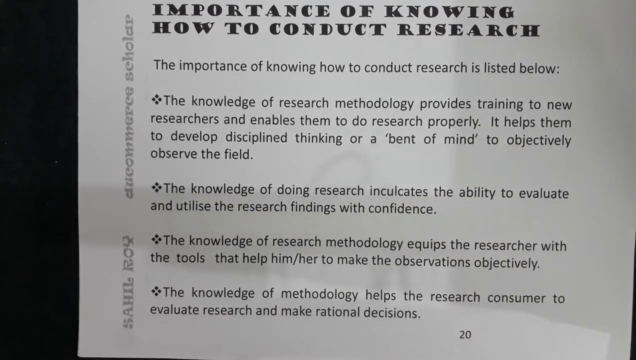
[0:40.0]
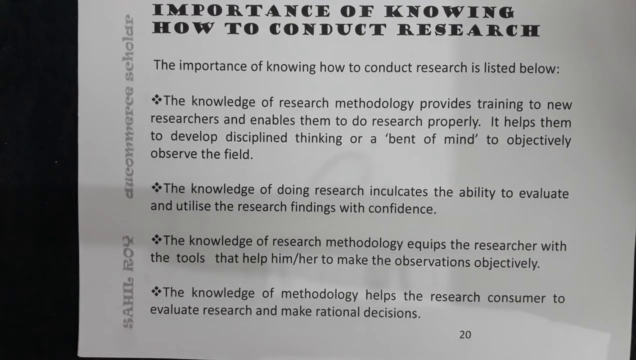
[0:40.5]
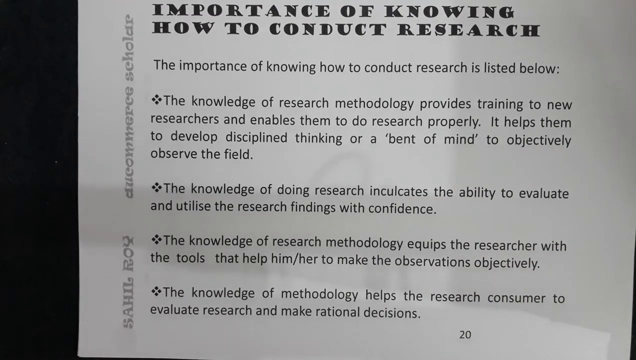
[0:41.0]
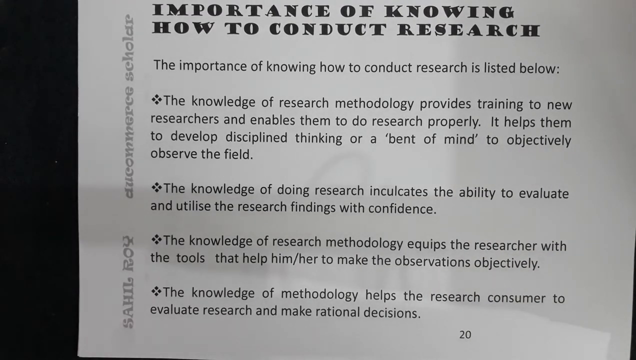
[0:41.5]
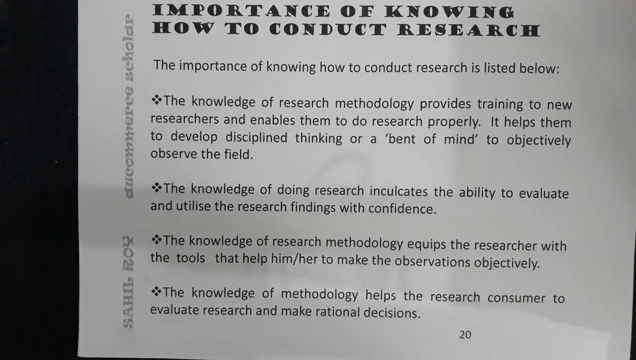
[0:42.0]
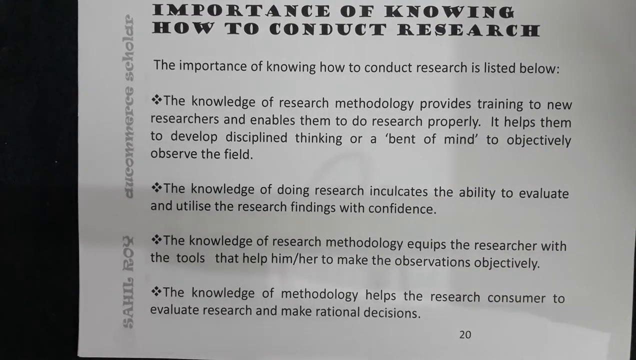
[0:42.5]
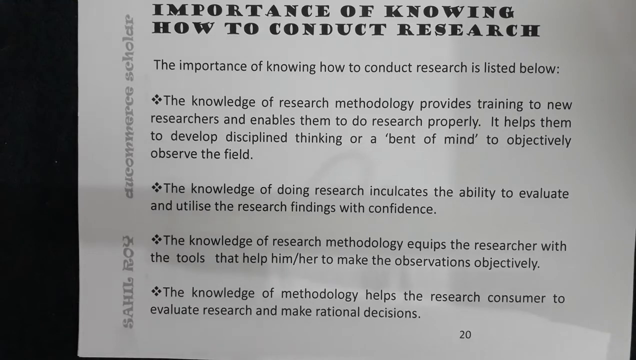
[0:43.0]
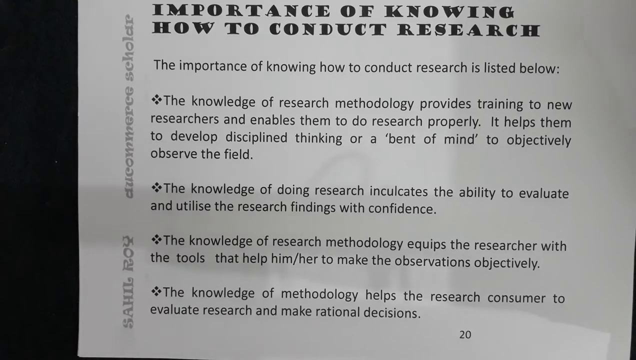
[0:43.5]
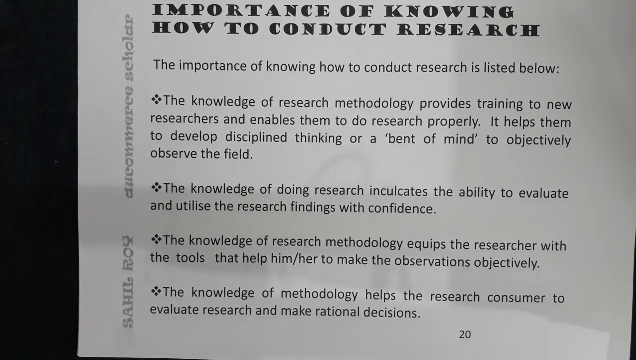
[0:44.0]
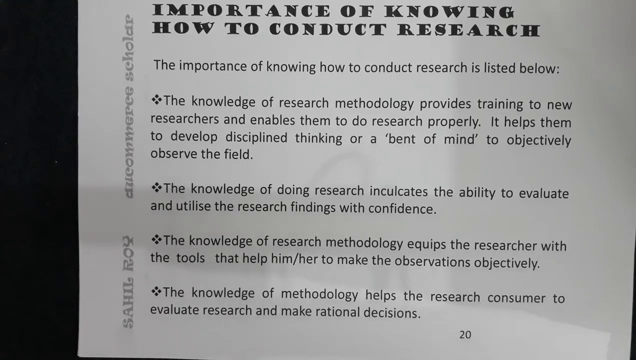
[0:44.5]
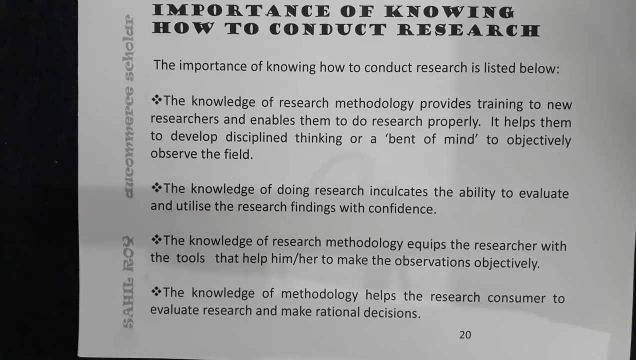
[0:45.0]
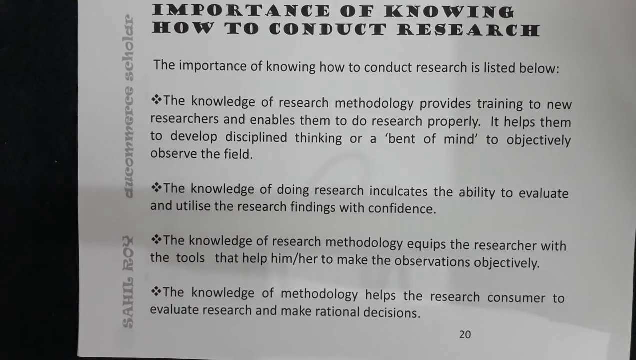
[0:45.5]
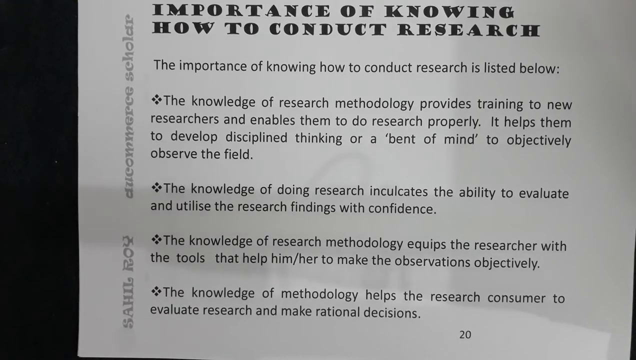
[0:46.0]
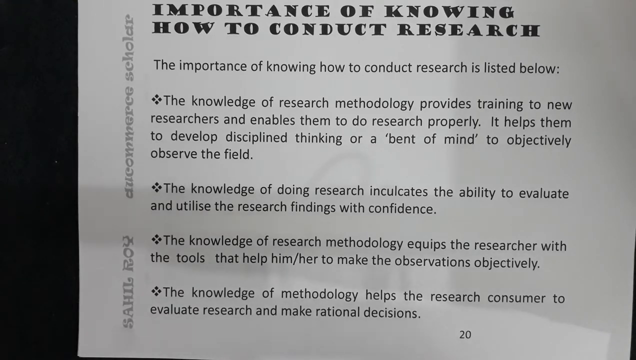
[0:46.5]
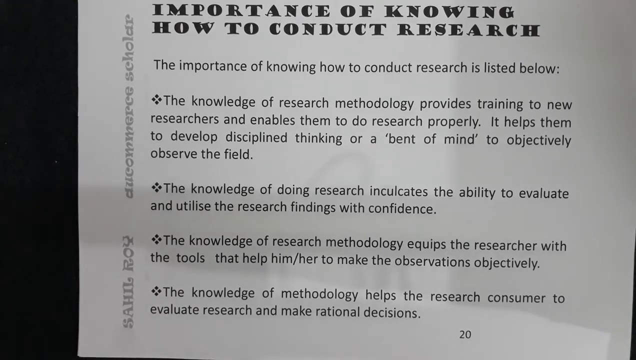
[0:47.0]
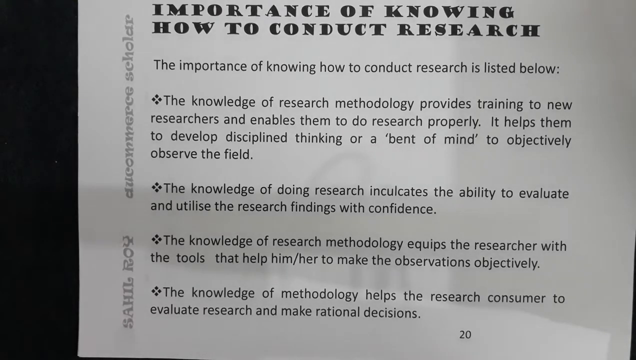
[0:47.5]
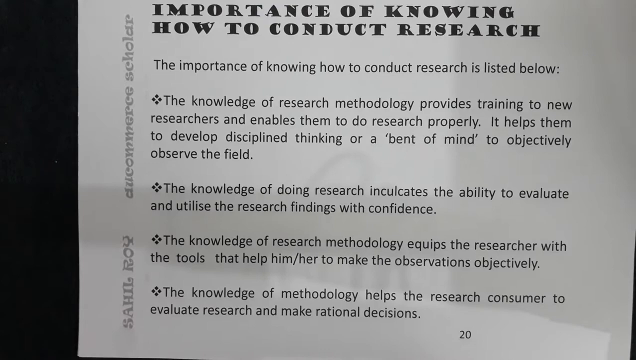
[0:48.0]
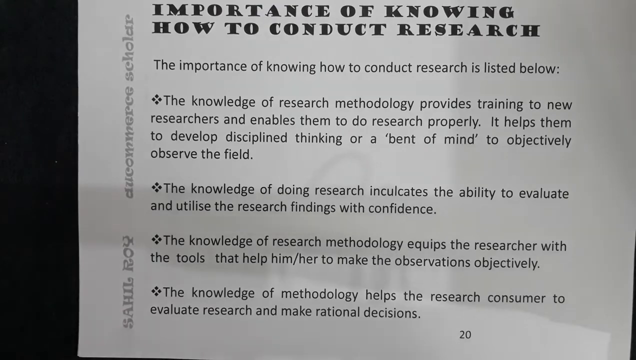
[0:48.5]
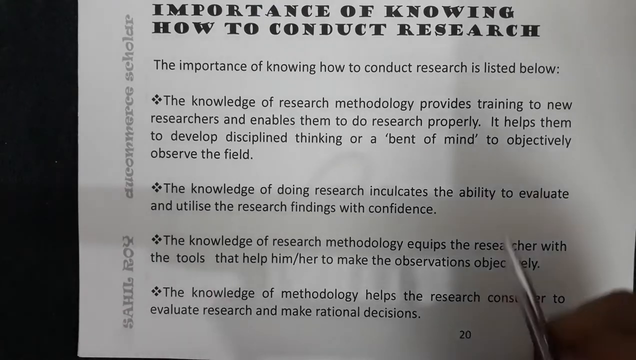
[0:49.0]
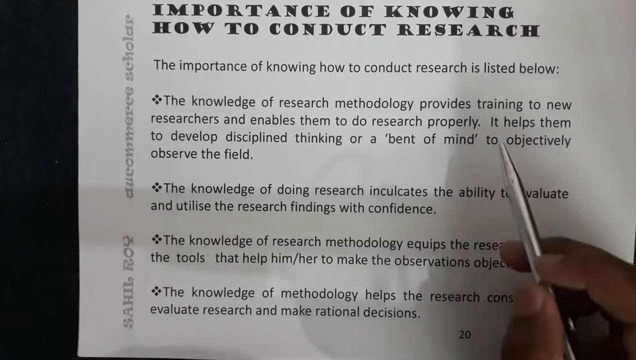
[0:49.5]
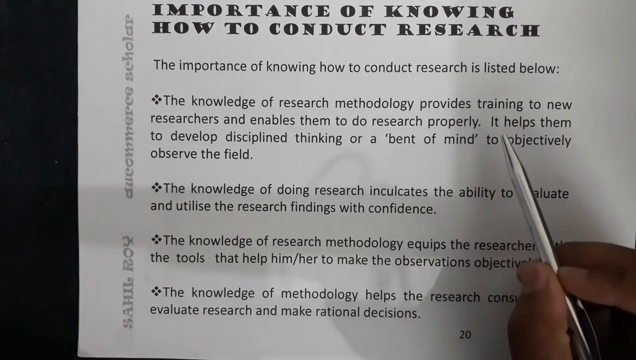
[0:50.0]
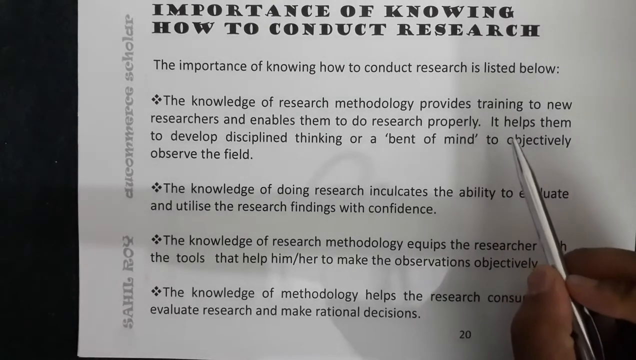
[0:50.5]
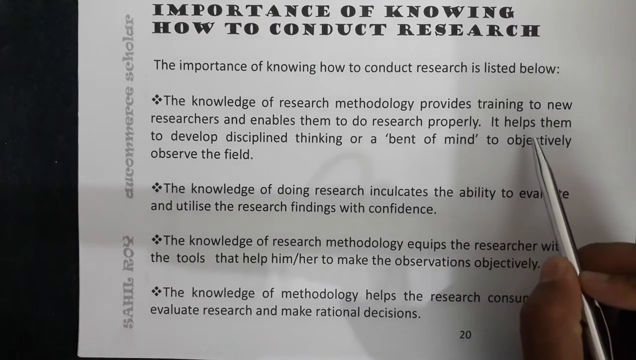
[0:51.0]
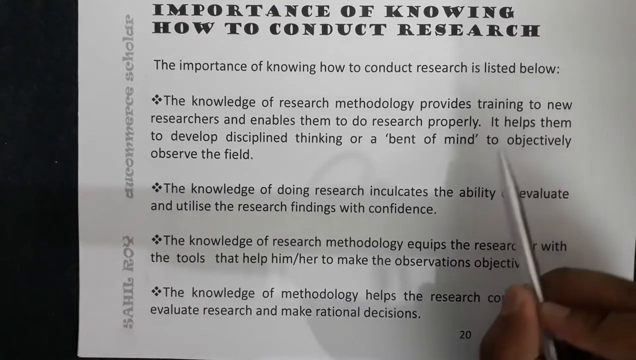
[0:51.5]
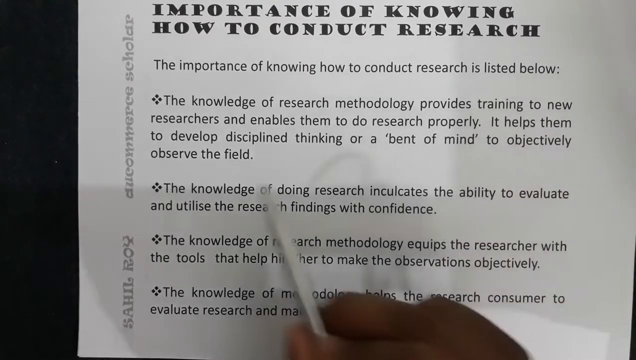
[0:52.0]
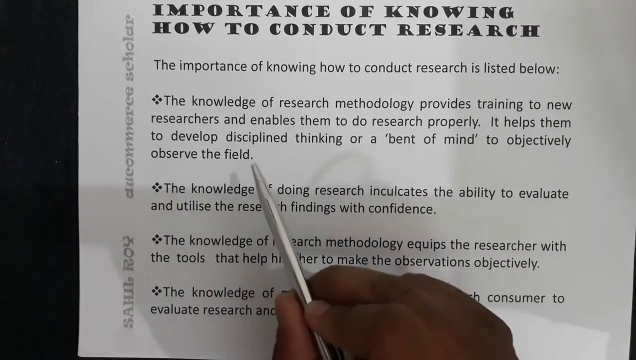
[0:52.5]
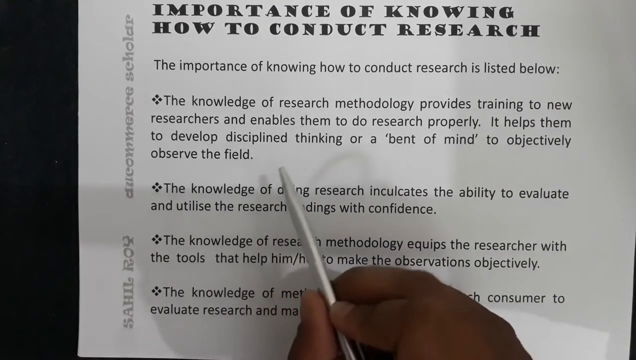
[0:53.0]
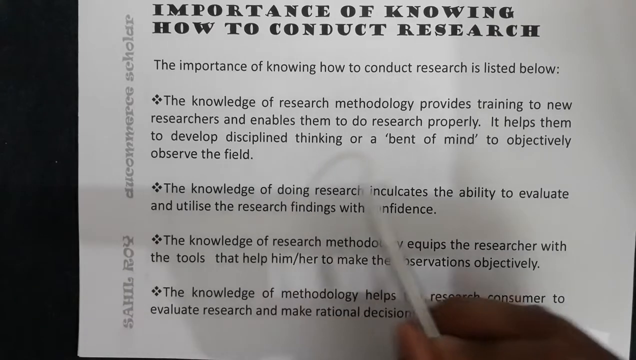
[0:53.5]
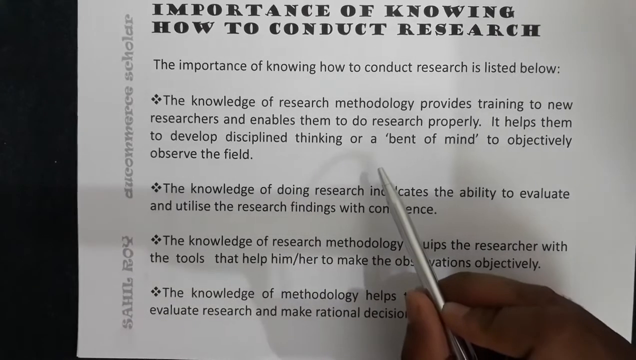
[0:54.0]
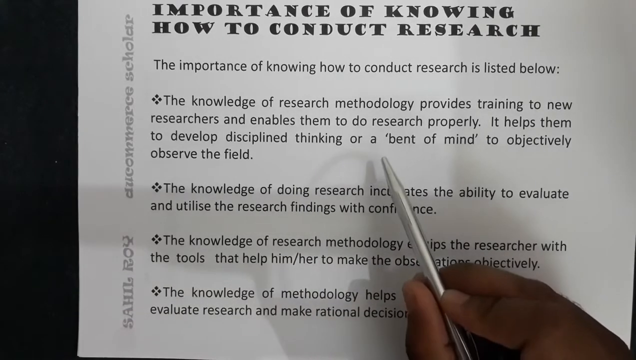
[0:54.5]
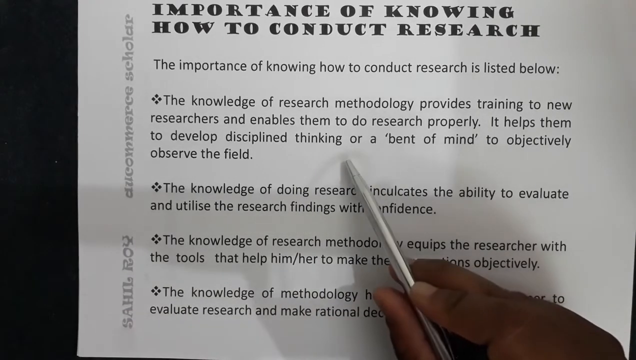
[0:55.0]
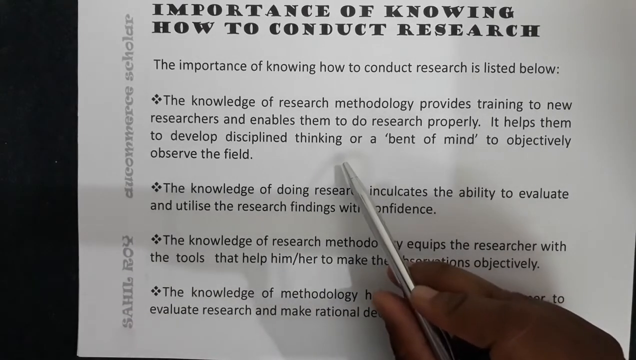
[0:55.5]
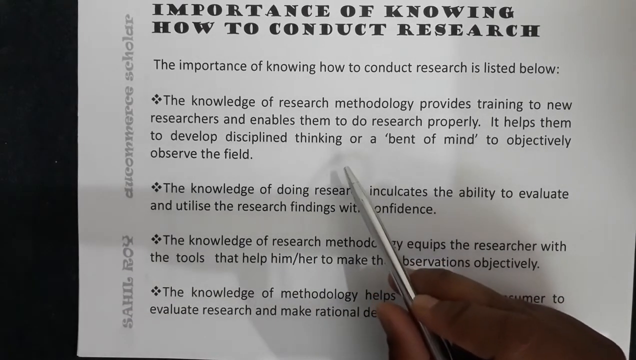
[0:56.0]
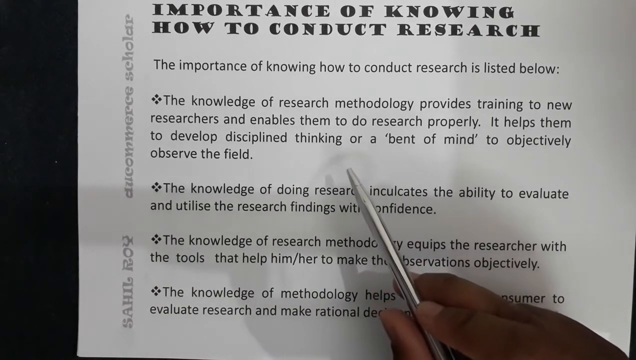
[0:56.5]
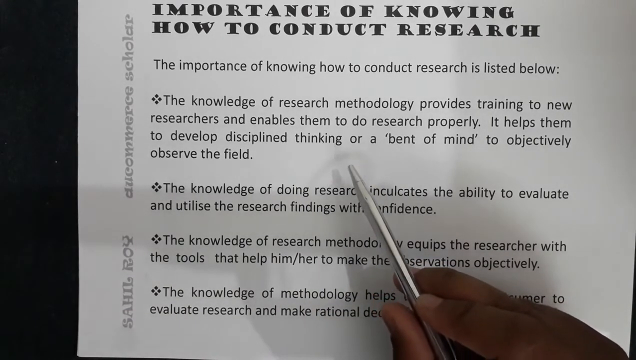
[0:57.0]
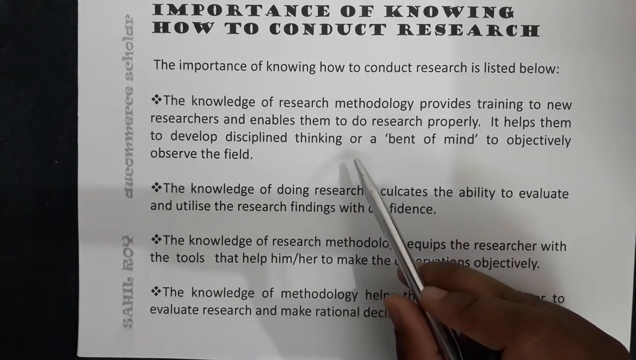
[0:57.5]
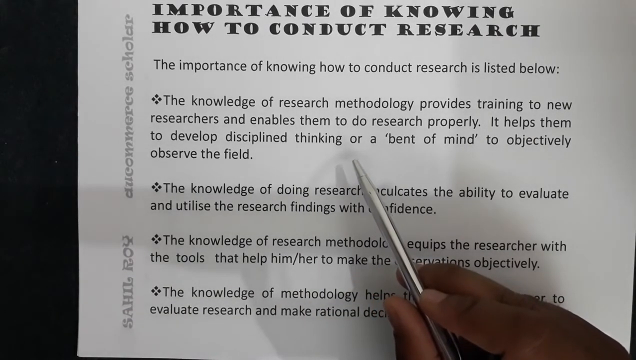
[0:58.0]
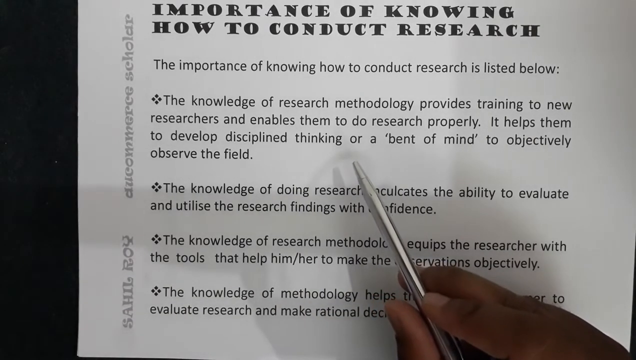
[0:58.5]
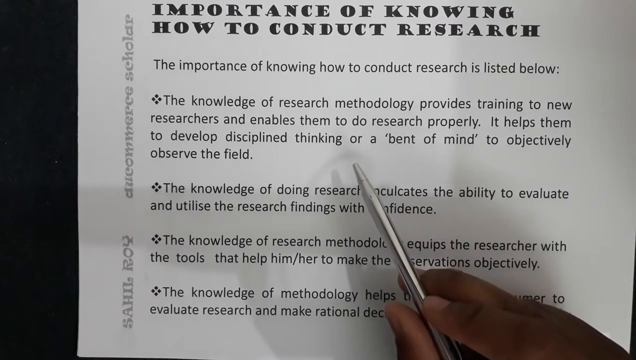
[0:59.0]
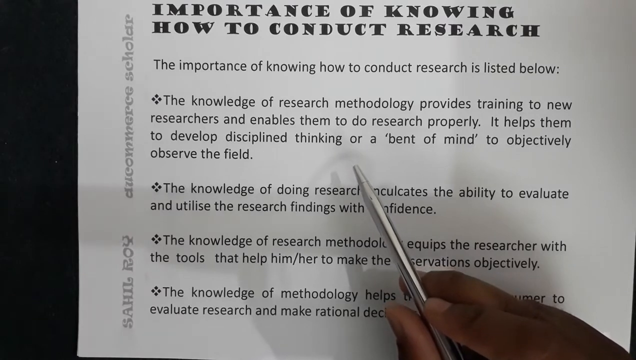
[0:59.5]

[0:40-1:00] A piece of paper lists bullet points, including "The knowledge of doing research inculcates the ability to evaluate and utilize research findings with confidence" and "The knowledge of the research methodology helps the research consumer to evaluate research and make rational decisions." A person hovers over the paper with a silver pen. It appears to be a white piece of printer paper. At the top, in bold, it says "importance of knowing how to conduct research." On the left margin, what looks like "DoCommerce Scholar" is written.